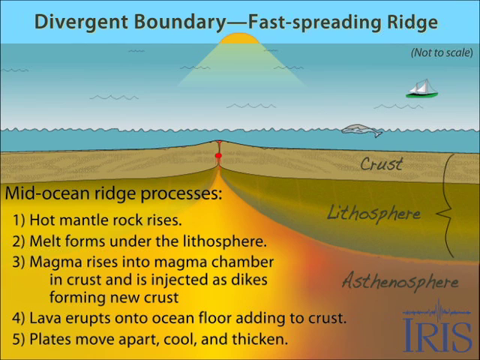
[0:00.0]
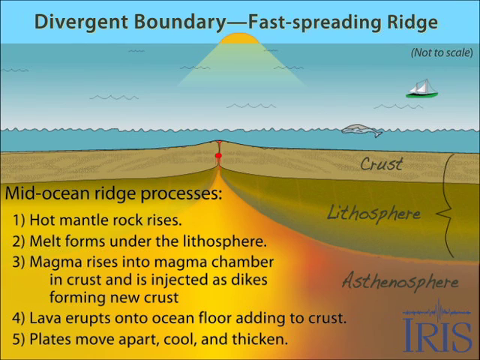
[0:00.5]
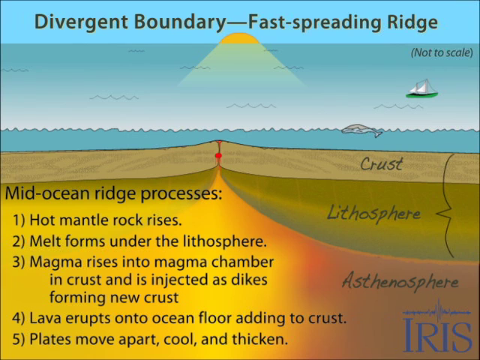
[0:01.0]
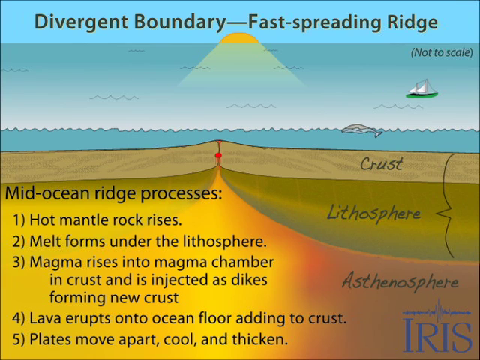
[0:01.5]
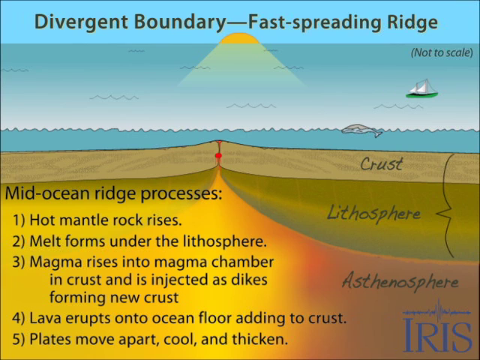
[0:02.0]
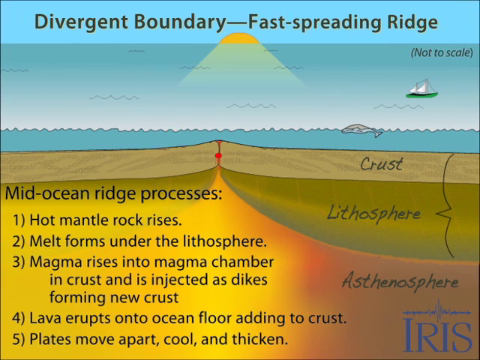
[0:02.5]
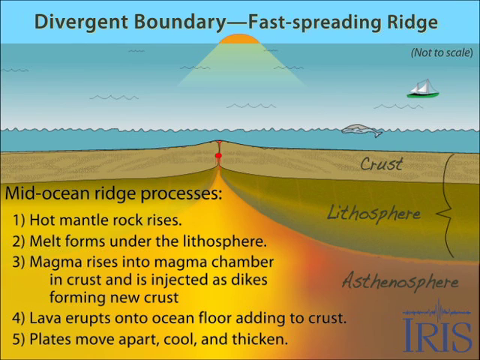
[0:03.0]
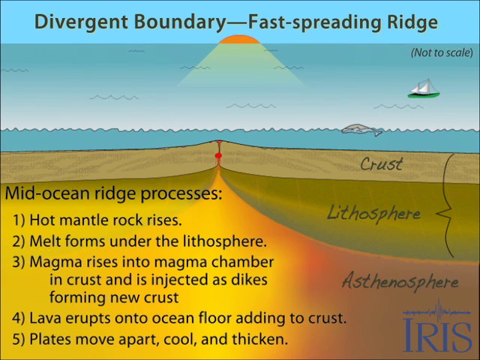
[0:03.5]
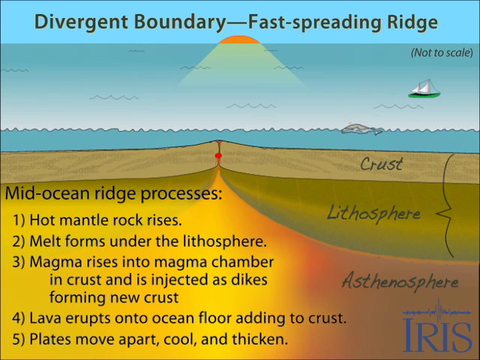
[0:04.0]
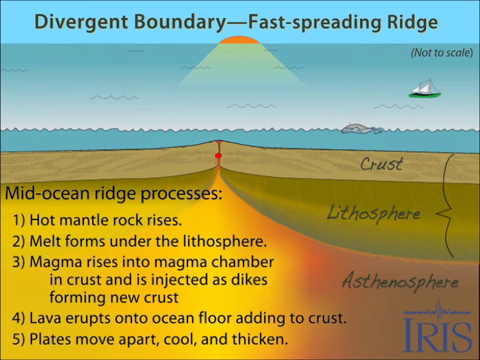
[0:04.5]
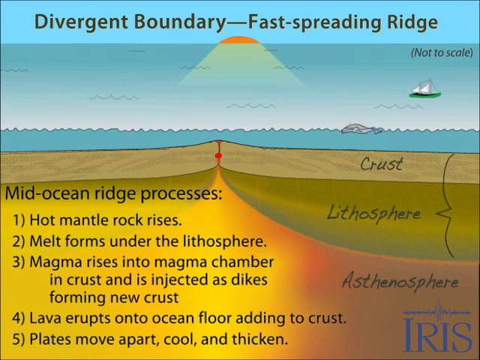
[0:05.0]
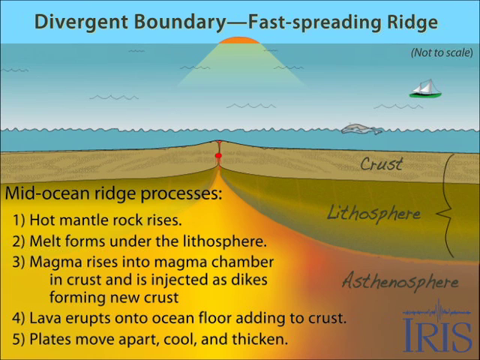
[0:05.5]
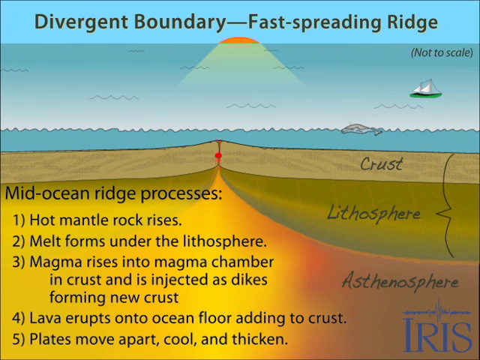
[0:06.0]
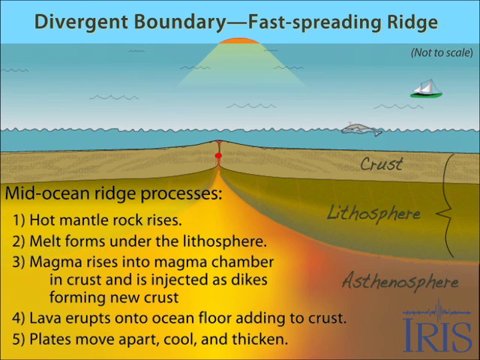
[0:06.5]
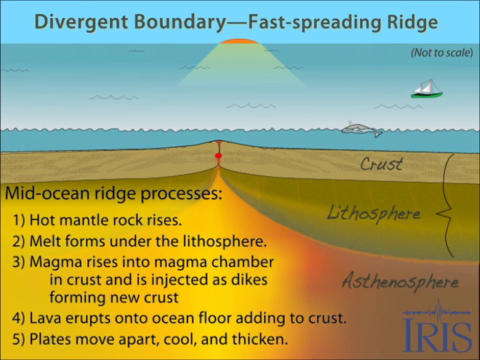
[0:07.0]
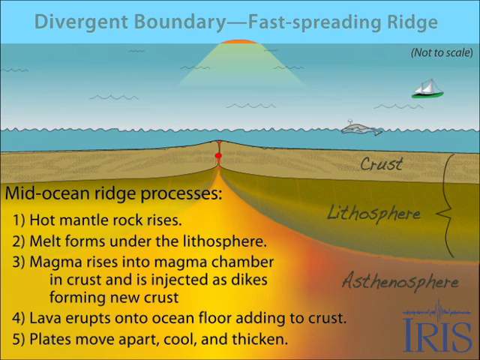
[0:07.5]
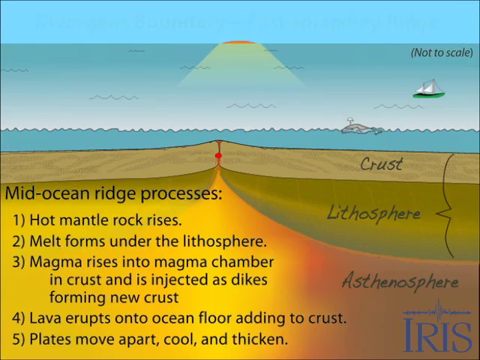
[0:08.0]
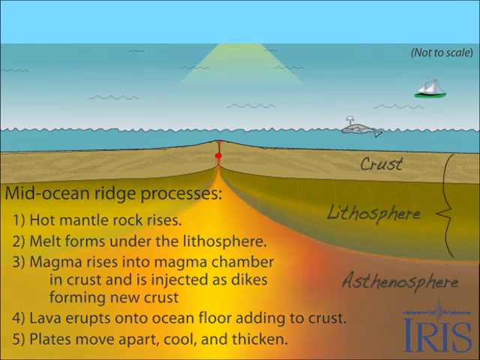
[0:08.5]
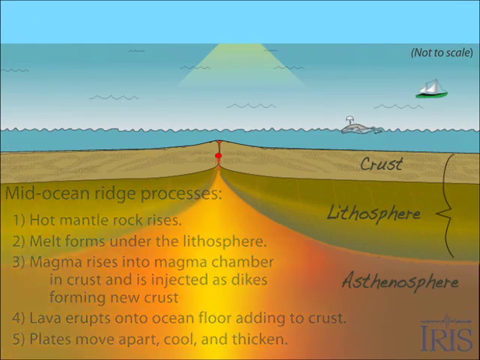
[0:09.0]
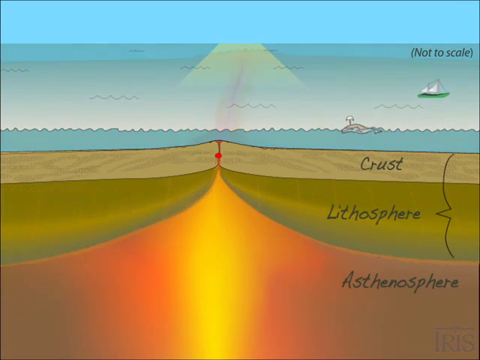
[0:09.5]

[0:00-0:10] A graphic shows a cross-section of the layers of the Earth below the ocean floor, under the header "Divergent Boundary--Fast-spreading Ridge." The ocean is depicted, and below the ocean floor are the crust, the lithosphere, and the asthenosphere. Text on the left of the screen reads "Mid-Ocean Ridge Processes: 1) Hot mantle rock rises, 2) Melt forms under the lithosphere, 3) Magma rises into magma chamber in crust and is injected as dikes forming new crust, 4) Lava erupts onto ocean floor adding to crust, and 5) Plates move apart to cool and thicken." A logo reading "Iris" is at the bottom right of the screen.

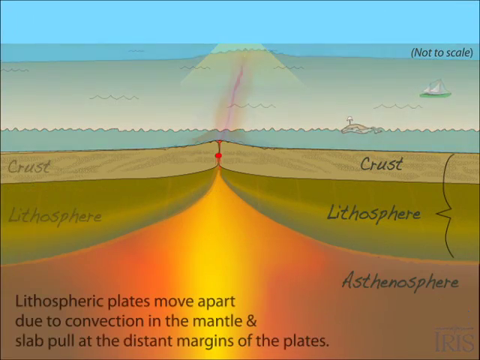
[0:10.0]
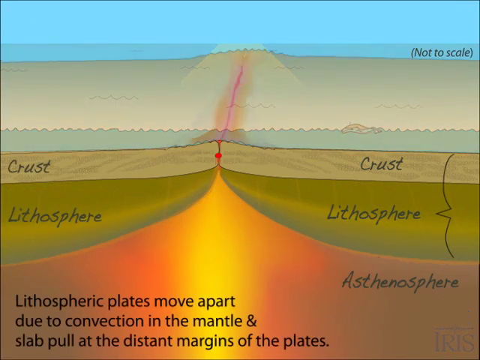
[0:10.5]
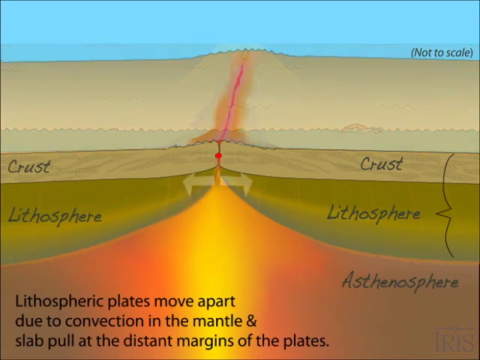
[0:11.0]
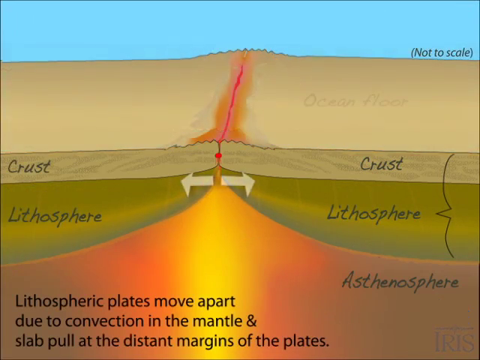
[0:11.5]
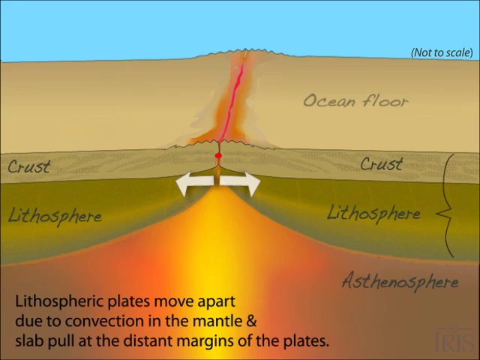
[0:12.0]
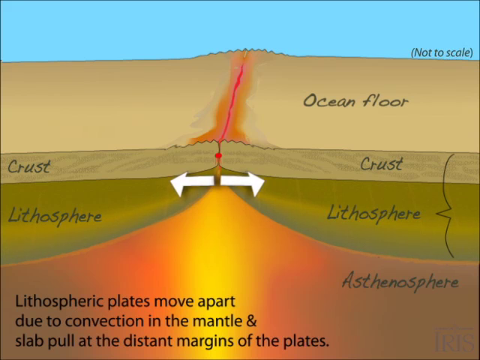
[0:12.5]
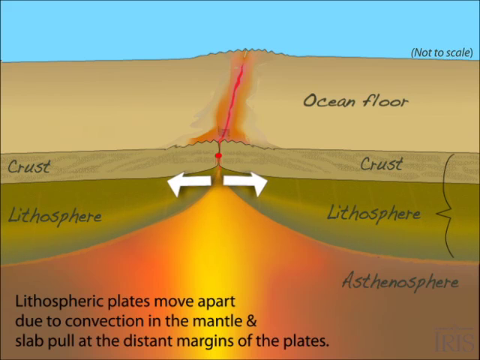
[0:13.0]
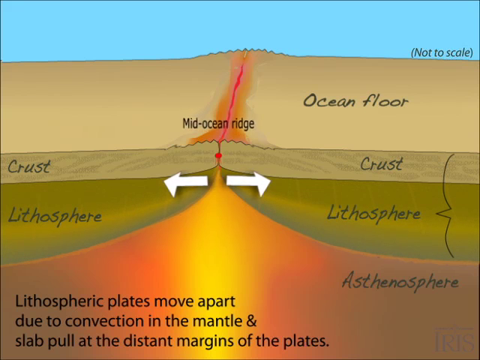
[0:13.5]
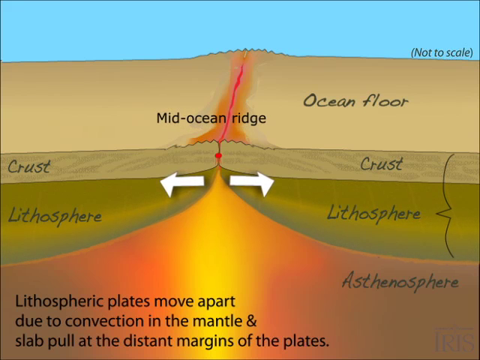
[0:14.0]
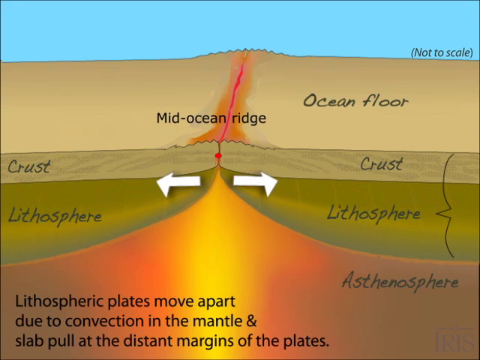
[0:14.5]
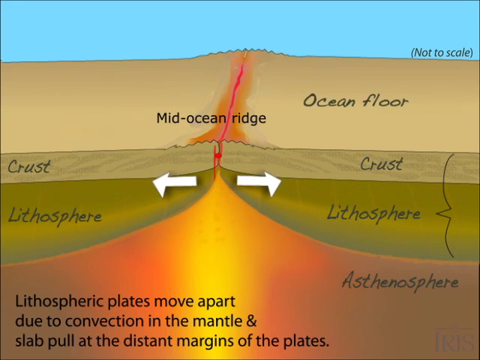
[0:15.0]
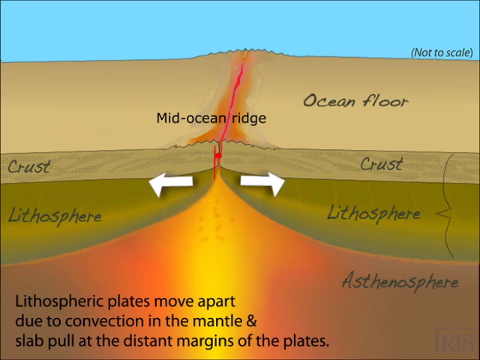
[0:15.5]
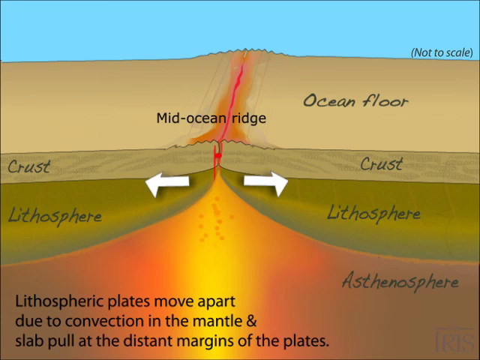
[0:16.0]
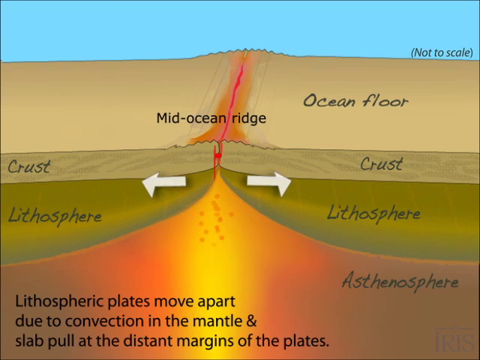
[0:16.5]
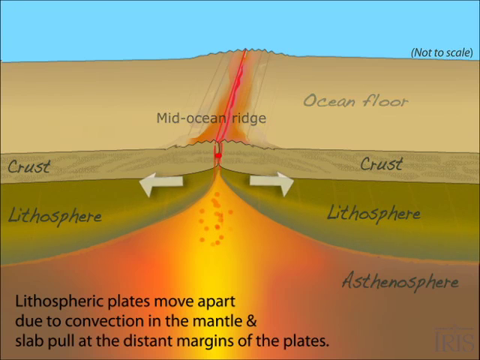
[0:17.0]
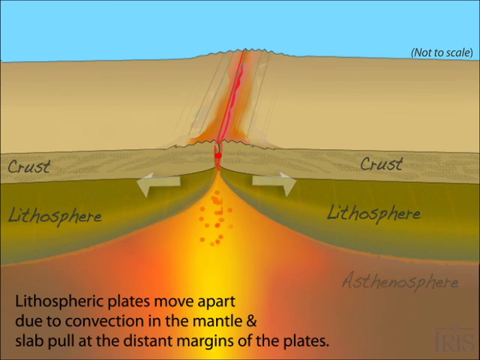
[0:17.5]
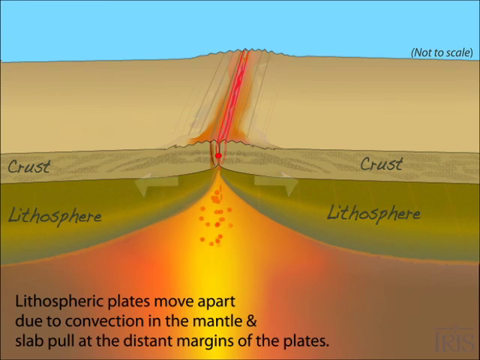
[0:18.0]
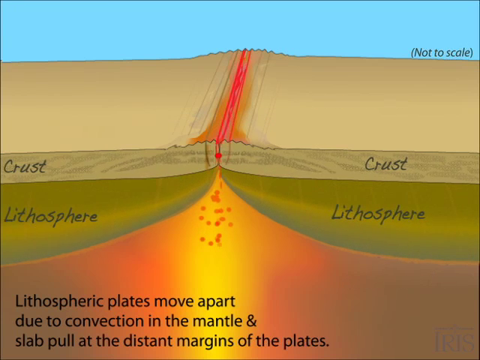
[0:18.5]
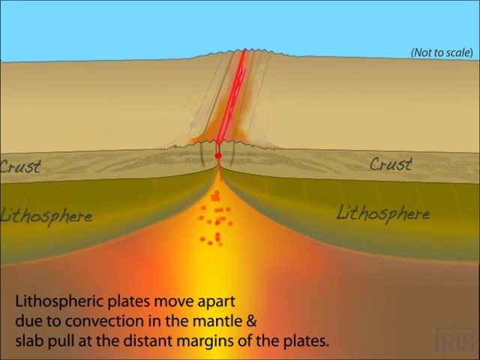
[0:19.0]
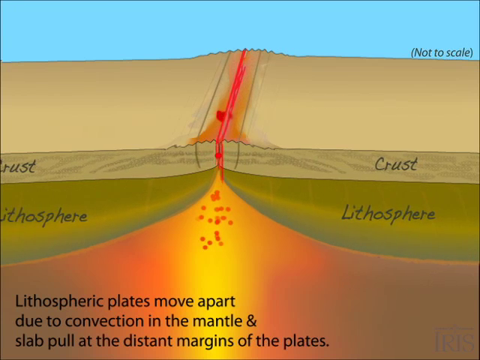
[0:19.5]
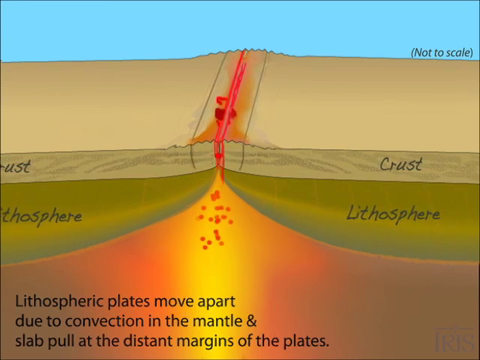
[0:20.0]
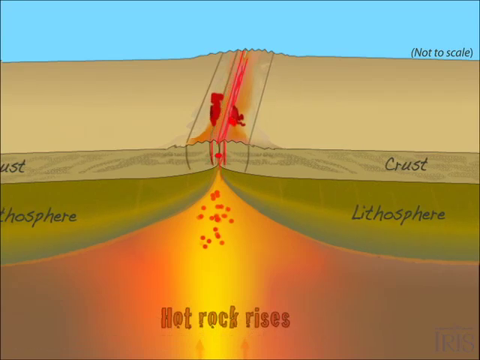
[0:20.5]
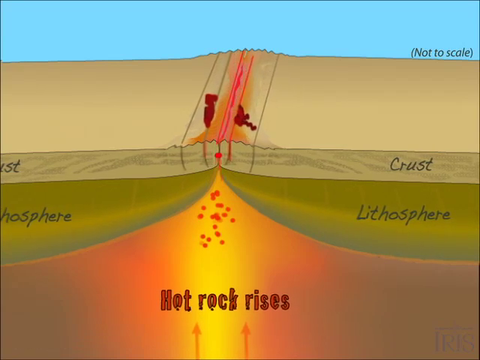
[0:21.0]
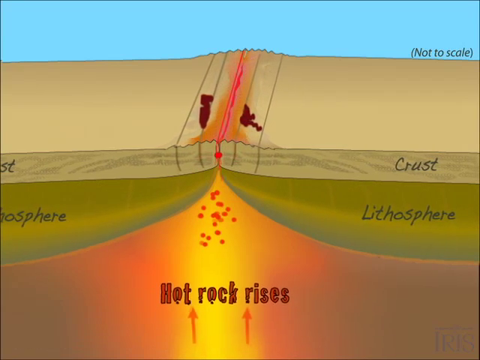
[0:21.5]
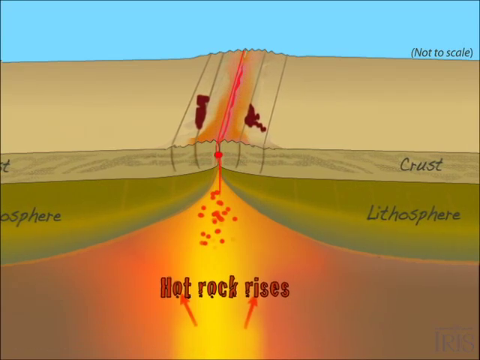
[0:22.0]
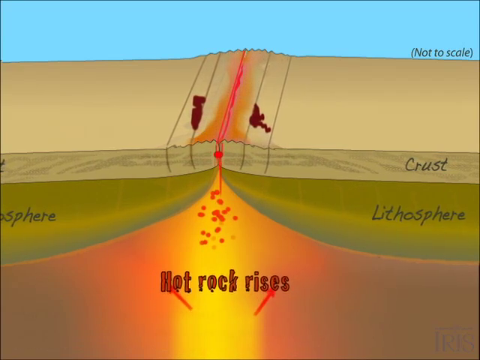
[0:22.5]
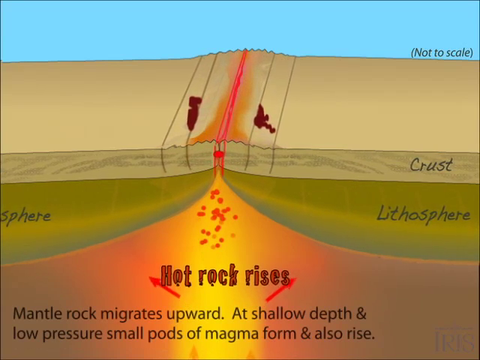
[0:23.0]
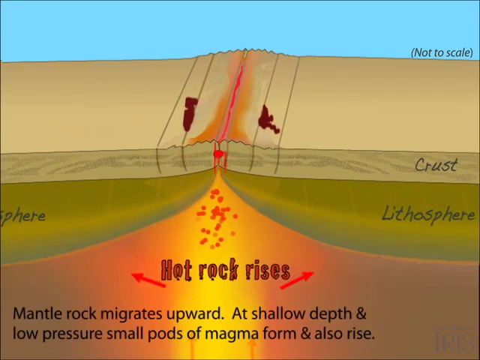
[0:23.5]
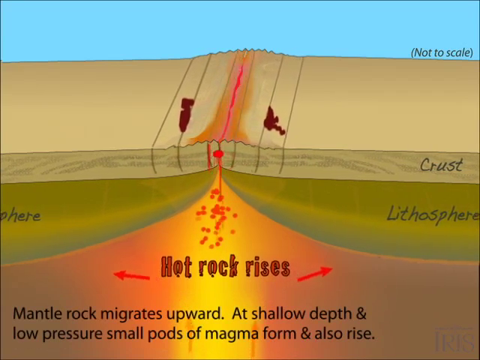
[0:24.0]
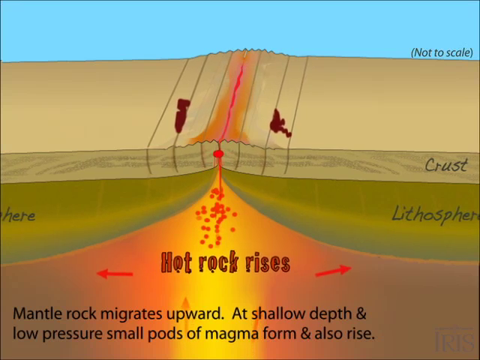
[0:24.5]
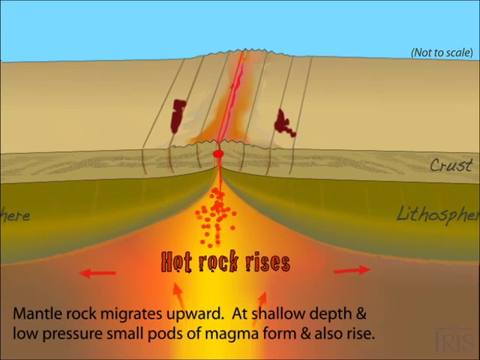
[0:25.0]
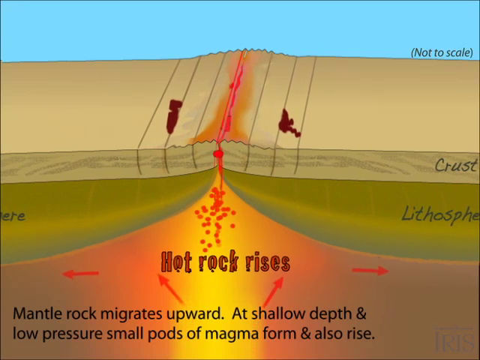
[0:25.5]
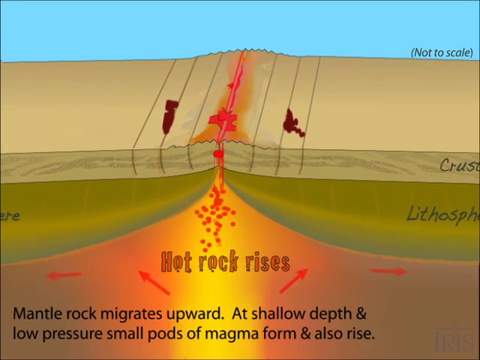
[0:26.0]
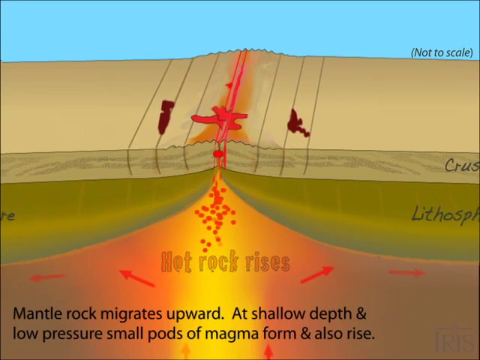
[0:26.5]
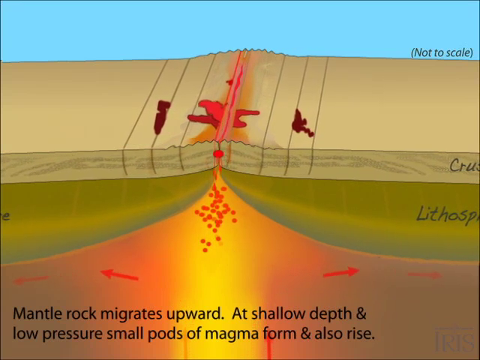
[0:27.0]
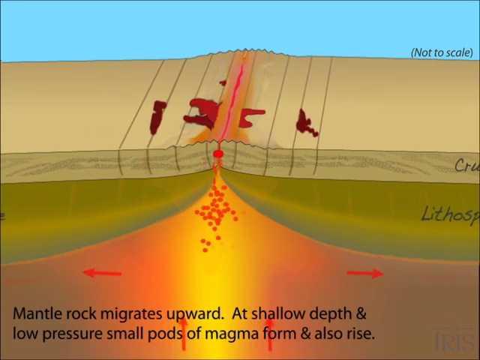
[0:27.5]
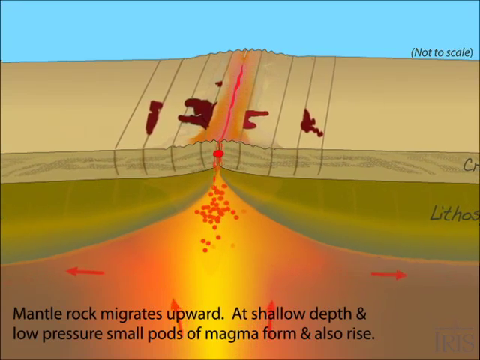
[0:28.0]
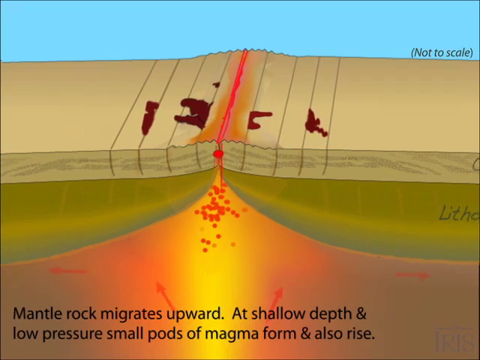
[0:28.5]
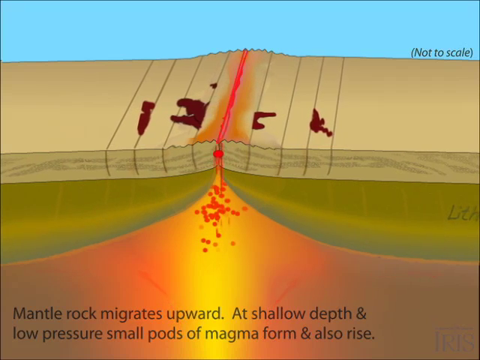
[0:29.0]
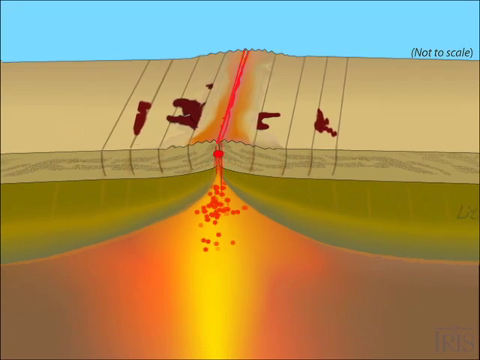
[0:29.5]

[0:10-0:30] A graph that looks like a cross-section of the Earth below the surface of the ocean shows the ocean at the top, then the crust, the lithosphere, and the asthenosphere, with what looks like a ridge forming to a point in the center. At the start, text at the bottom of the screen reads "Lithospheric plates move apart due to convection in the mantle and slab pull at the distant margins of the plate." White arrows appear, showing a mid-ocean ridge beginning to form in the center of the screen, and a red line comes down to indicate the mid-ocean ridge on the ocean floor. The ridge continues to form as the red line gets wider, and hot rock is visible rising. Text at the bottom of the screen reads "Mantle rock migrates upward. At shallow depth and low-pressure small pods of magma form and also rise." What look like vertical lines keep moving out from the center of the screen.